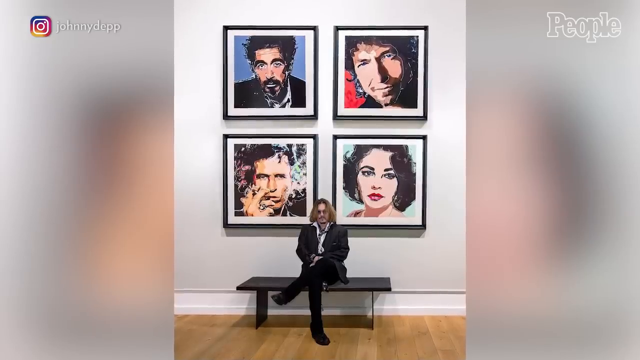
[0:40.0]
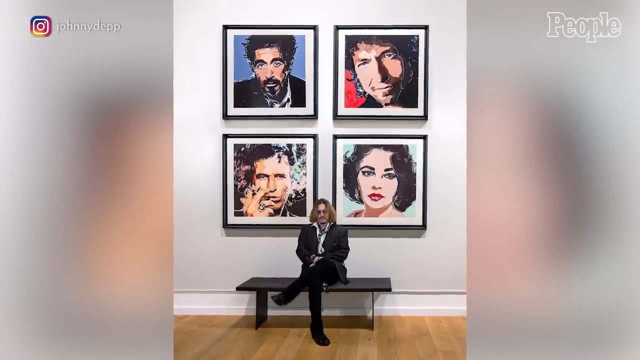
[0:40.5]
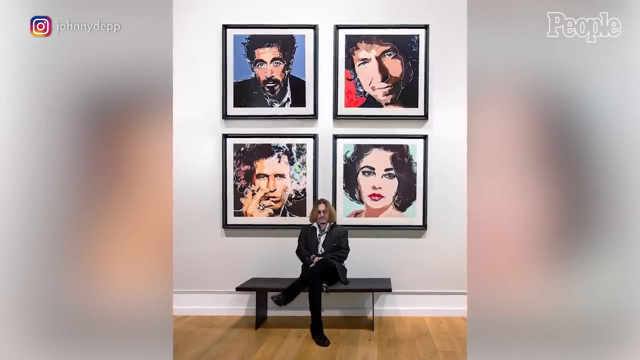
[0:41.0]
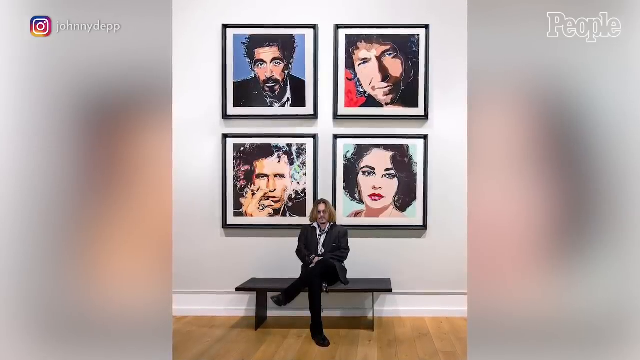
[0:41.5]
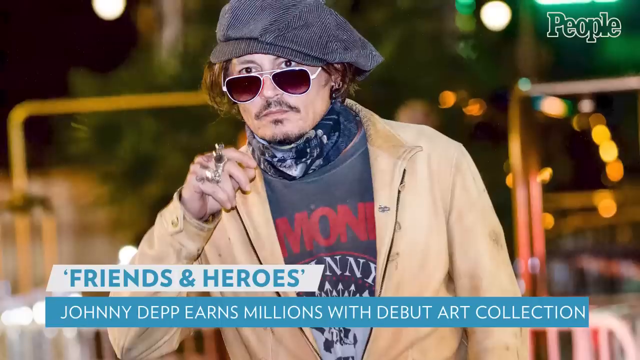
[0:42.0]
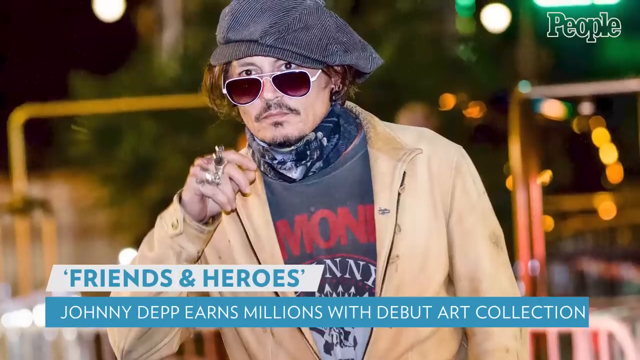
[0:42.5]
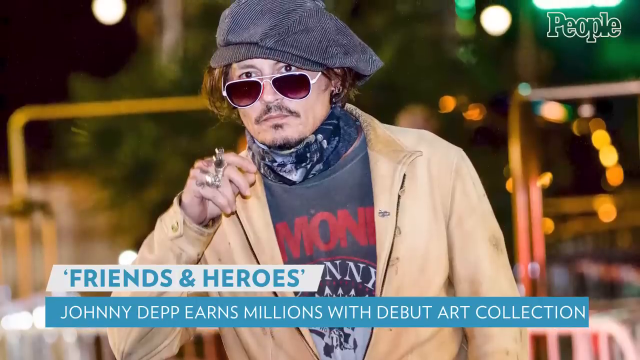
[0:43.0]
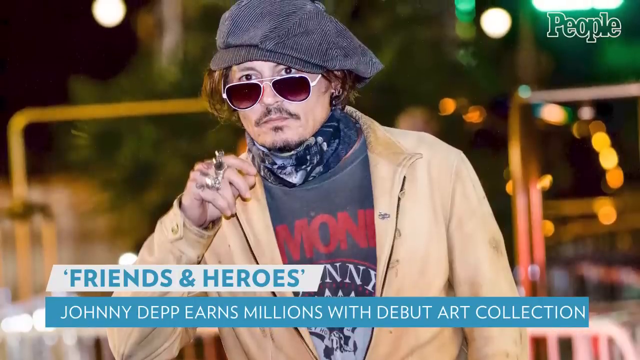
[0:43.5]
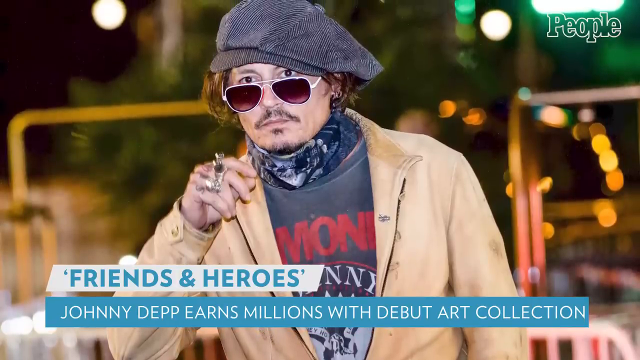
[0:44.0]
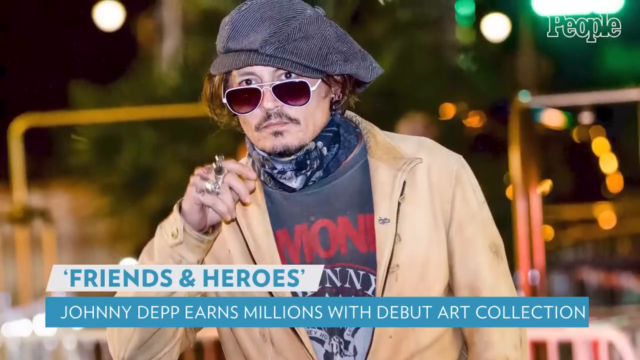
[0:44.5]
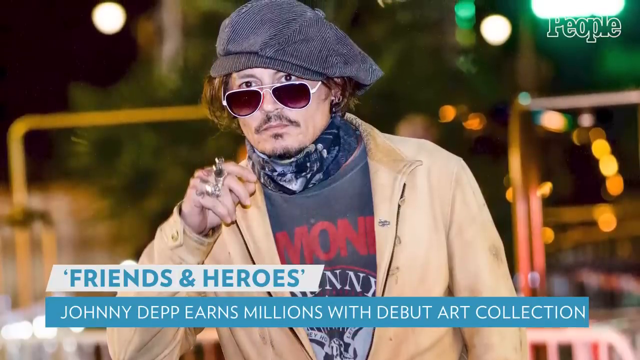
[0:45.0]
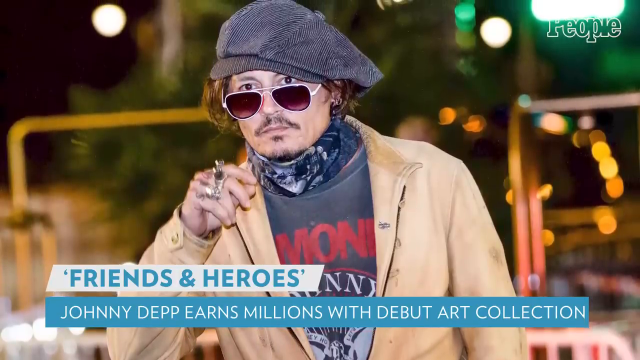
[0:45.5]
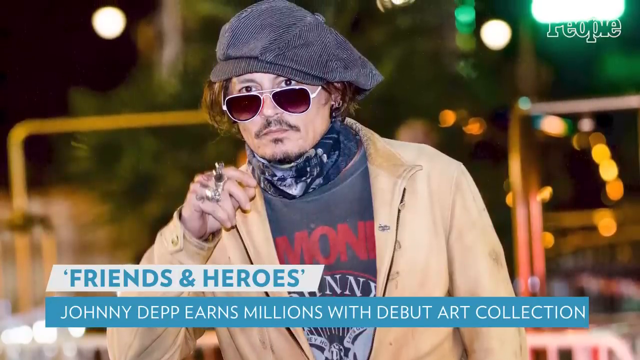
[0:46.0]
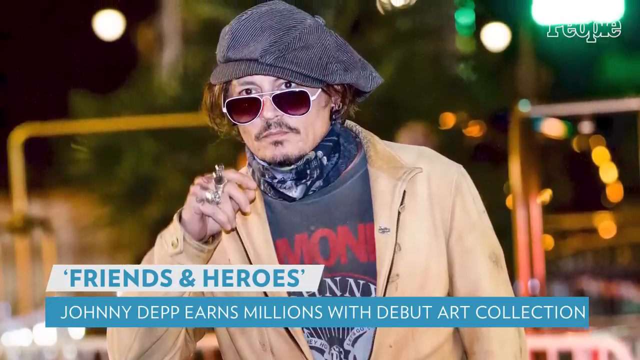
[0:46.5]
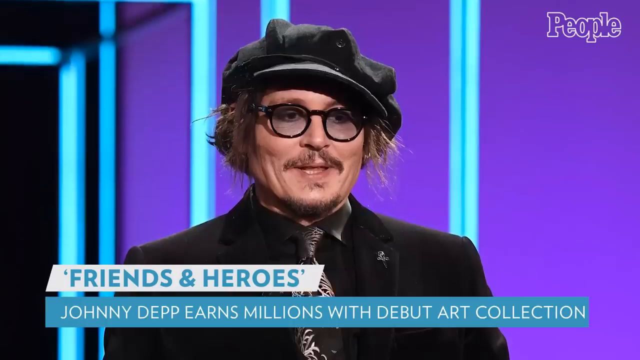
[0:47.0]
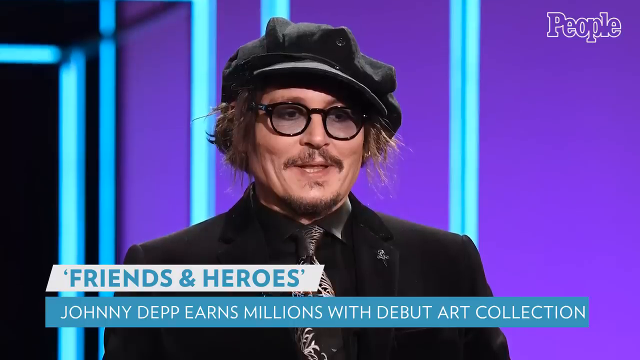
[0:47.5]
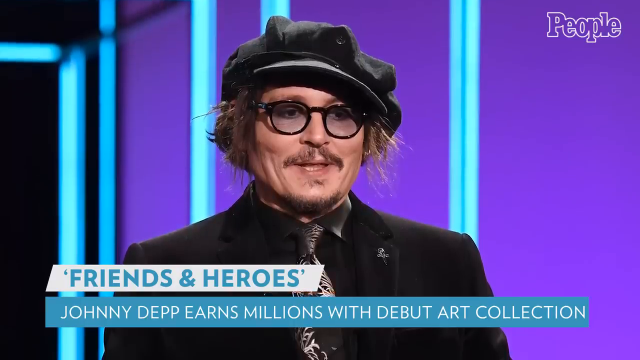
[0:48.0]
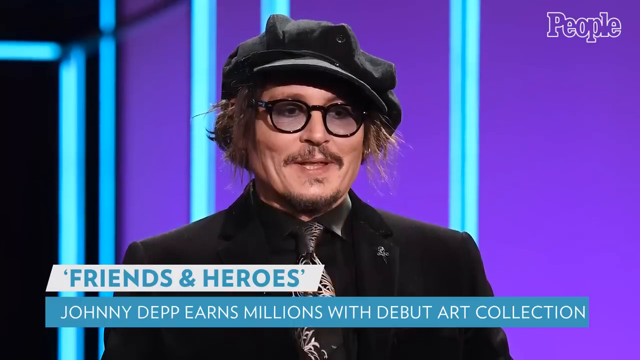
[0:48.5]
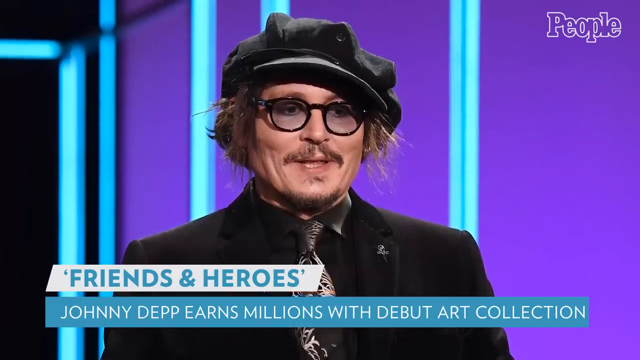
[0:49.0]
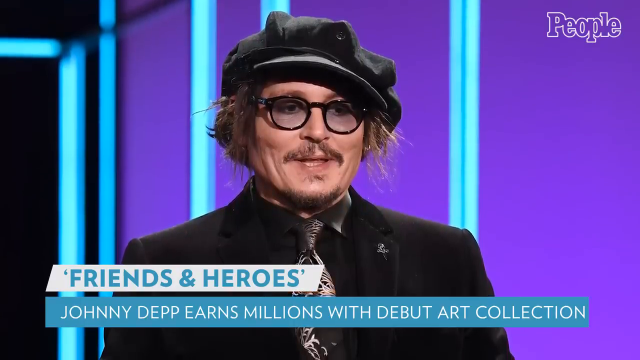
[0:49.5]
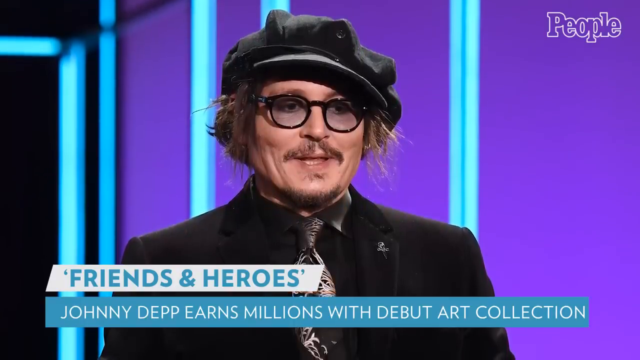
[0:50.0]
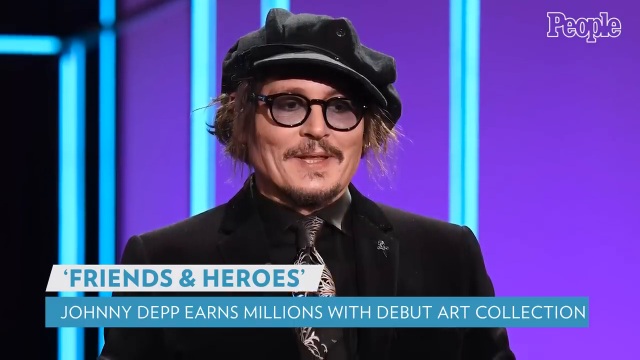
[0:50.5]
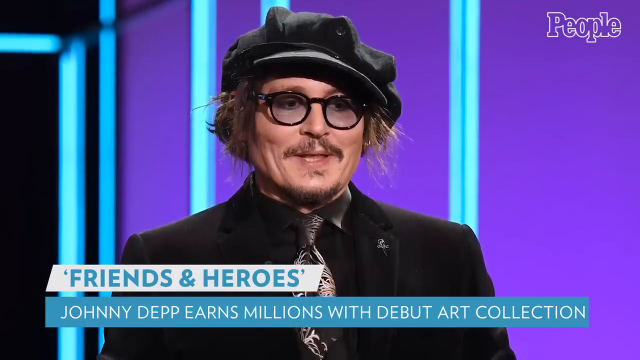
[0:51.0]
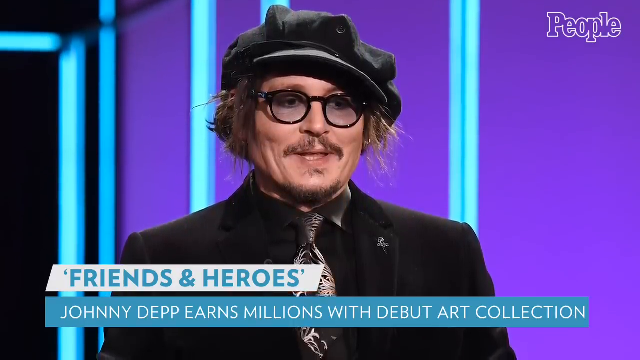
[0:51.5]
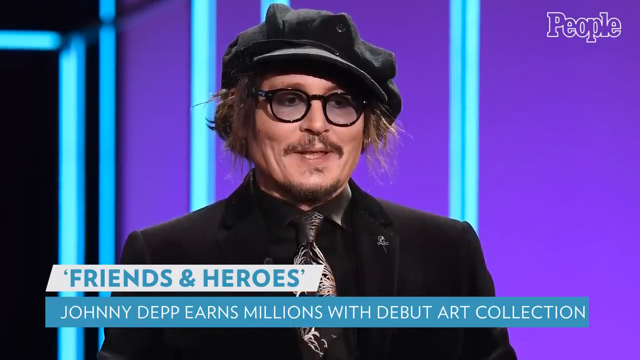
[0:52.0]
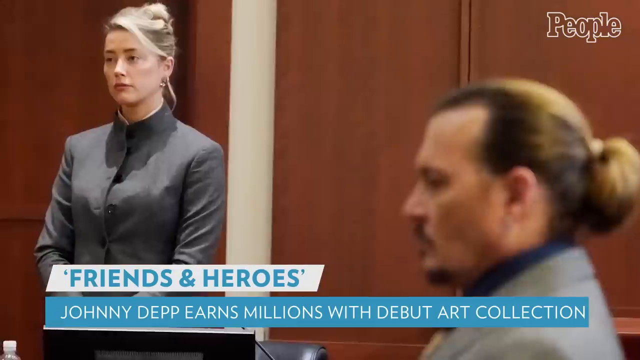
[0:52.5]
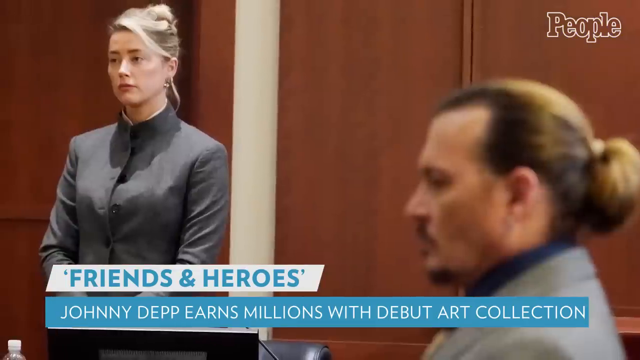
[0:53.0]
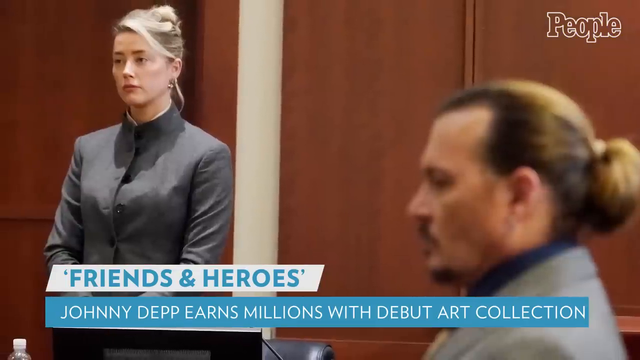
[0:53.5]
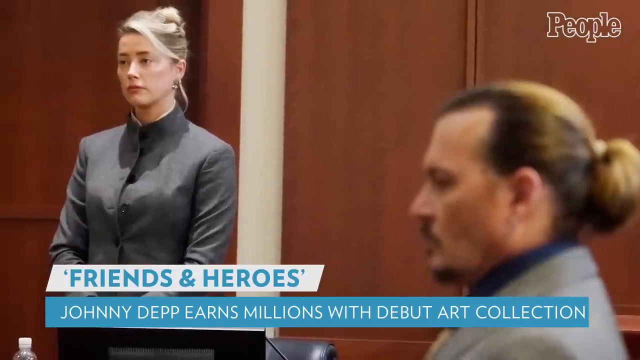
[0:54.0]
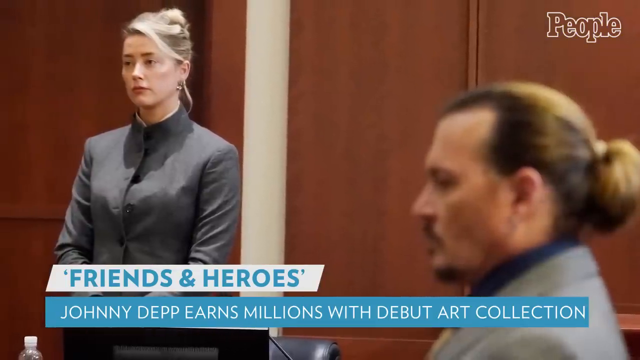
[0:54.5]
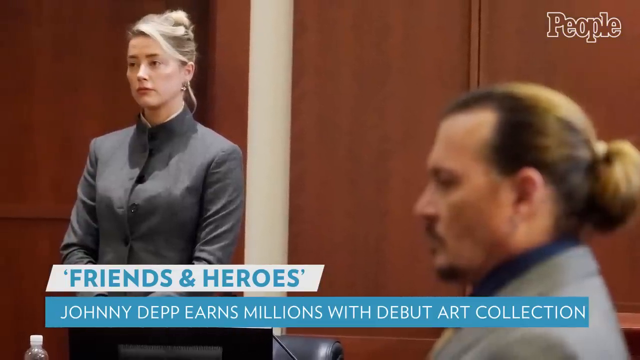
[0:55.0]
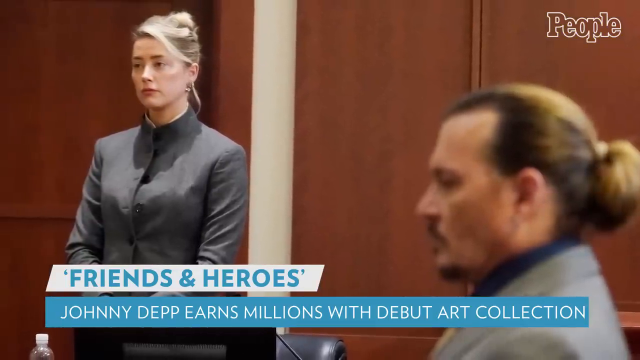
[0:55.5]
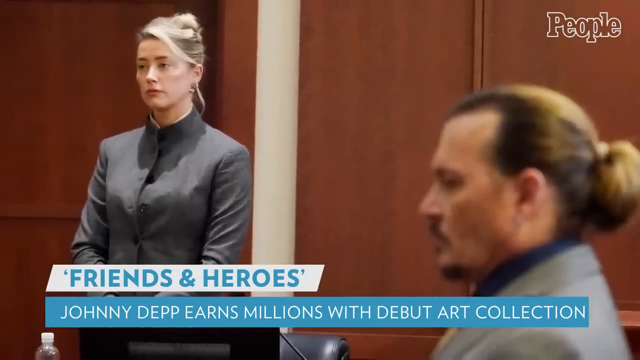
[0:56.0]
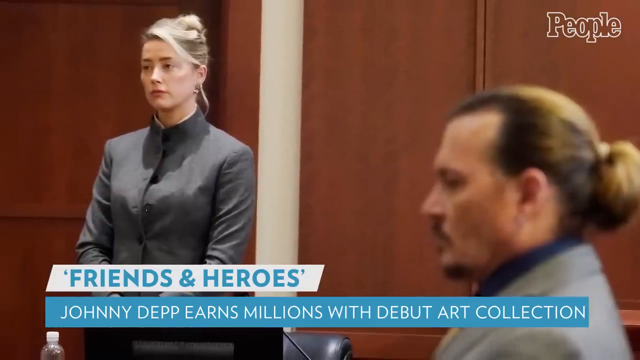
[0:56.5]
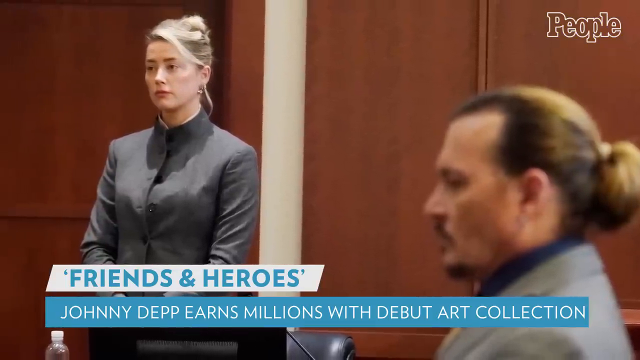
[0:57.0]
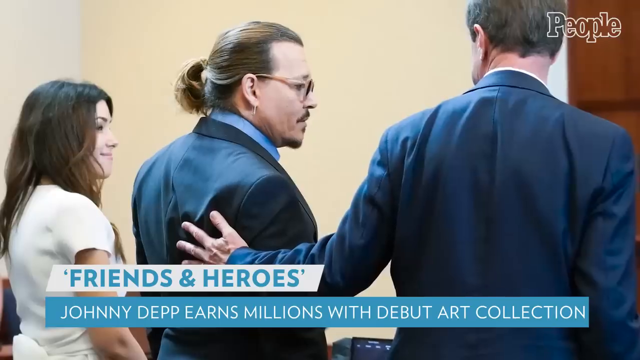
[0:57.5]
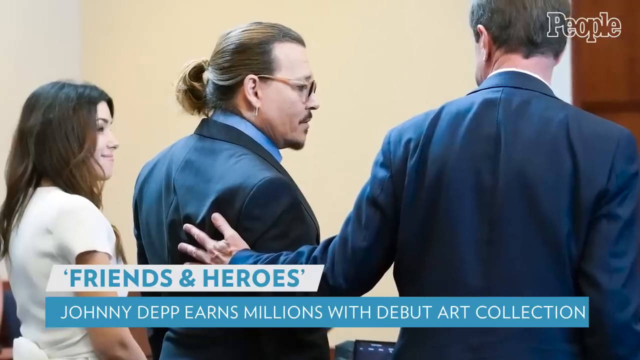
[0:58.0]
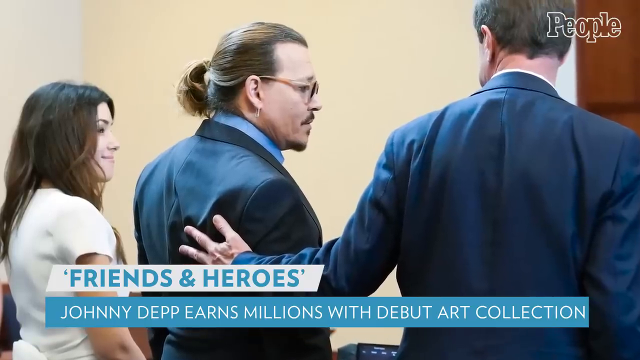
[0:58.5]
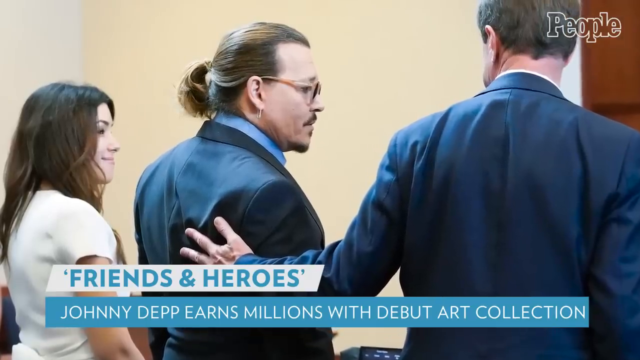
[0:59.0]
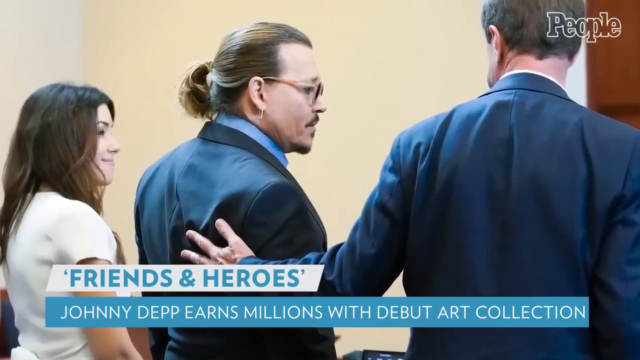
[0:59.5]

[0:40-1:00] An image shows a man wearing a light yellow jacket, a gray floppy hat and sunglasses, with what looks like greenery behind him. The image moves slightly; at the bottom, a white banner reads "Friends and Heroes" in blue writing, and below it a blue banner with white writing reads "Johnny Depp earns millions with debut art collection." The word "People" is in the upper right corner. Next comes another slightly moving image of the same man in a black suit, a black hat and dark-rimmed glasses, against a purple and bright blue background, with the same banner at the bottom. The next image shows a woman standing off to the left in a gray suit with her blonde hair pulled upward, and a man on the right with brown hair also pulled upward and his face turned sideways; a brown wall is behind them, and they look serious. The following slightly moving image shows three people: the same man stands in the middle with his hair pulled backwards, a woman with dark brown hair in a white shirt is on one side of him, and a man in a dark blue suit is on the other side, with a beige wall behind them.